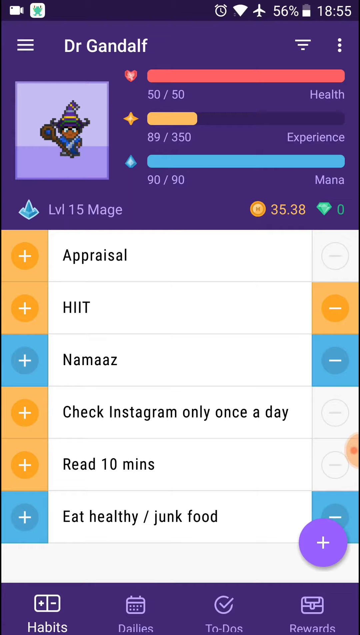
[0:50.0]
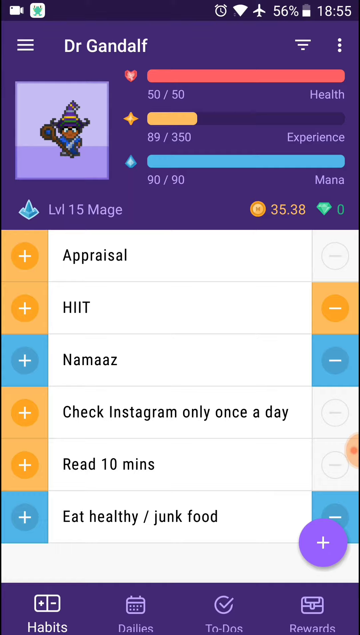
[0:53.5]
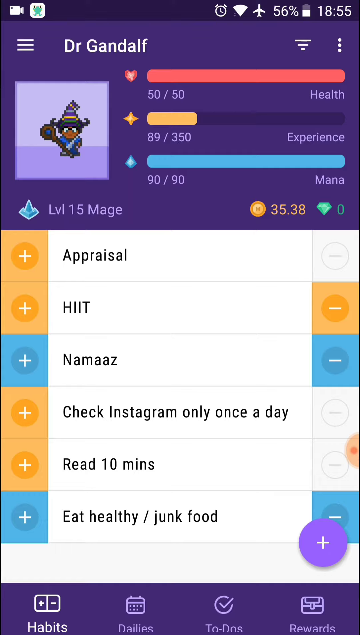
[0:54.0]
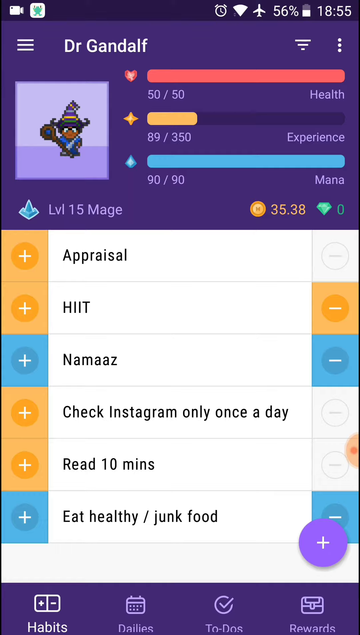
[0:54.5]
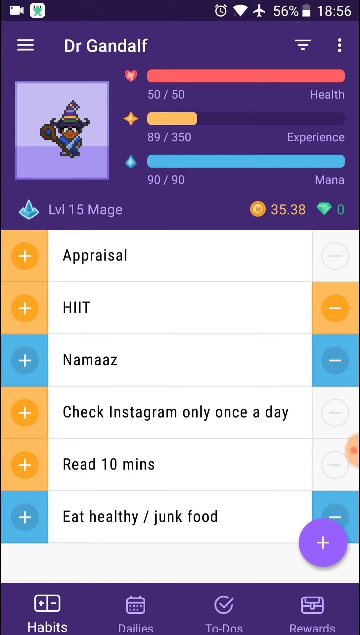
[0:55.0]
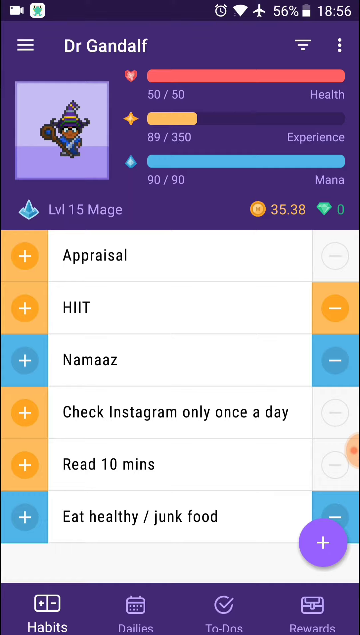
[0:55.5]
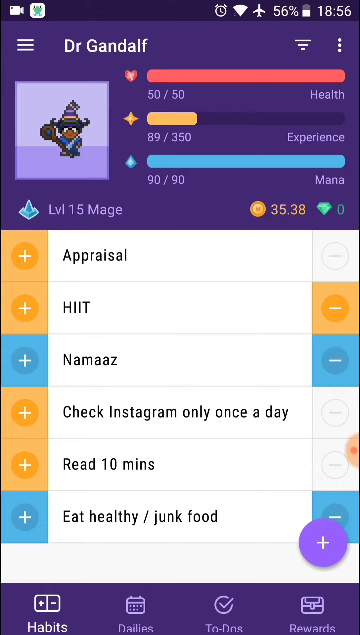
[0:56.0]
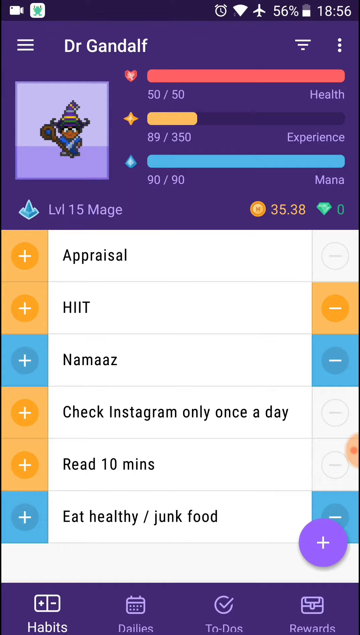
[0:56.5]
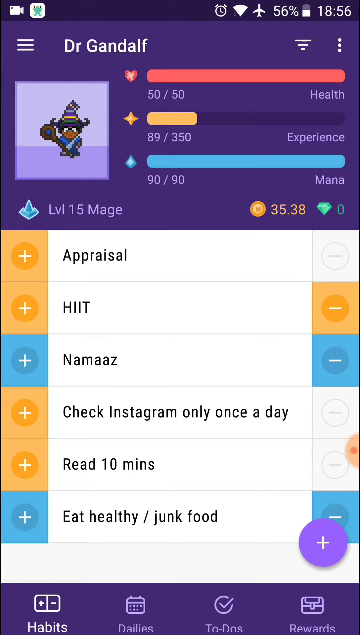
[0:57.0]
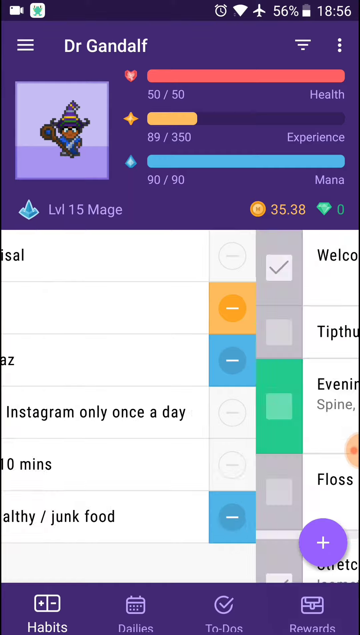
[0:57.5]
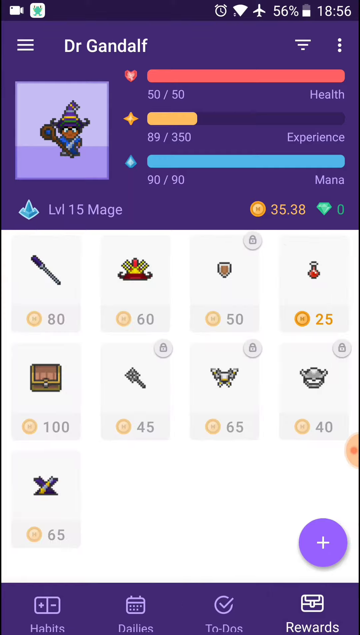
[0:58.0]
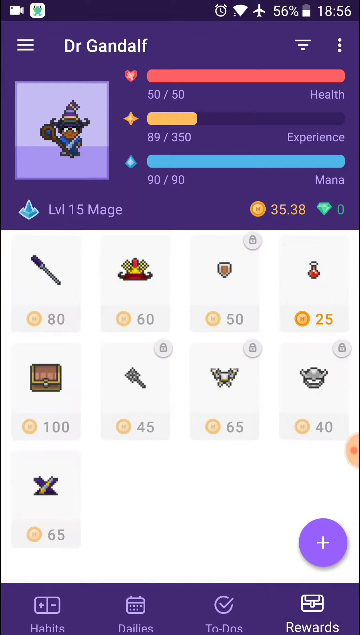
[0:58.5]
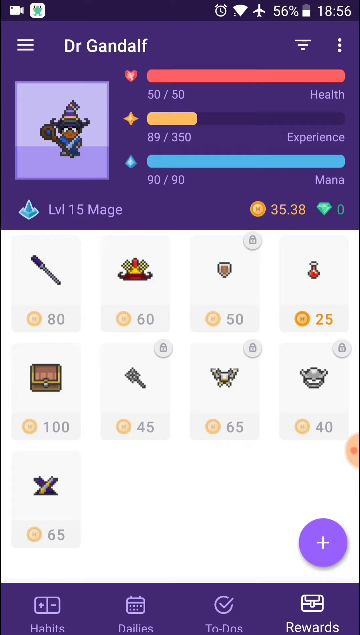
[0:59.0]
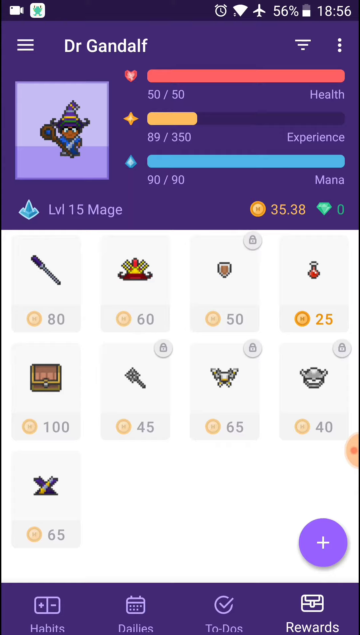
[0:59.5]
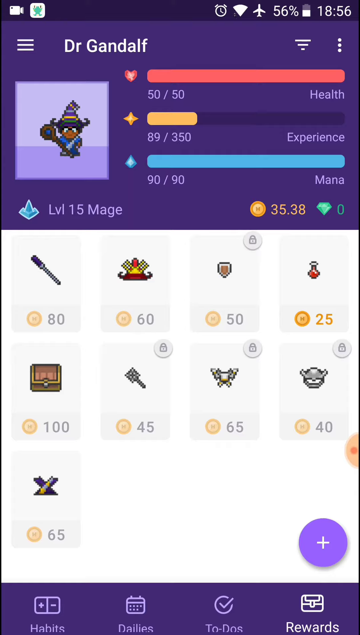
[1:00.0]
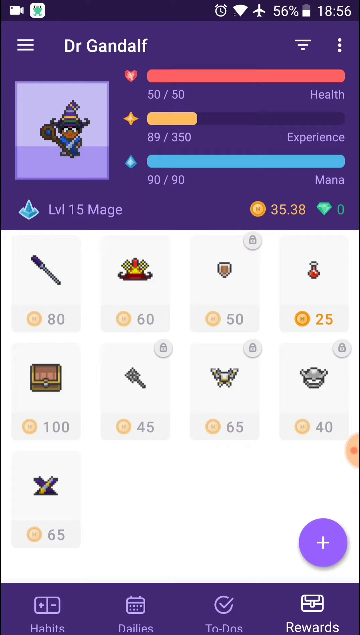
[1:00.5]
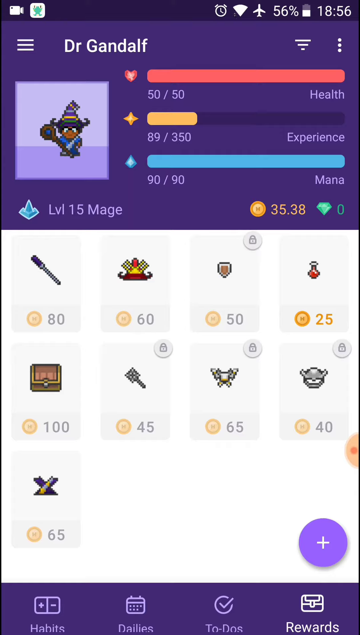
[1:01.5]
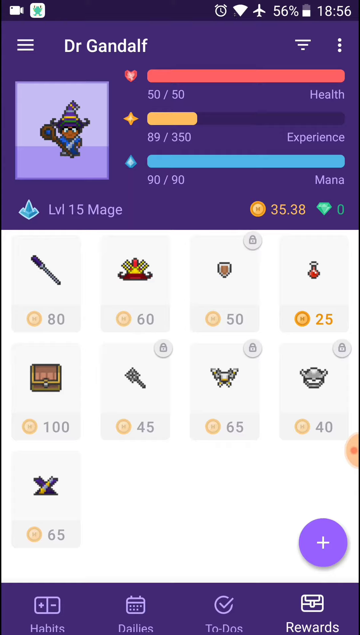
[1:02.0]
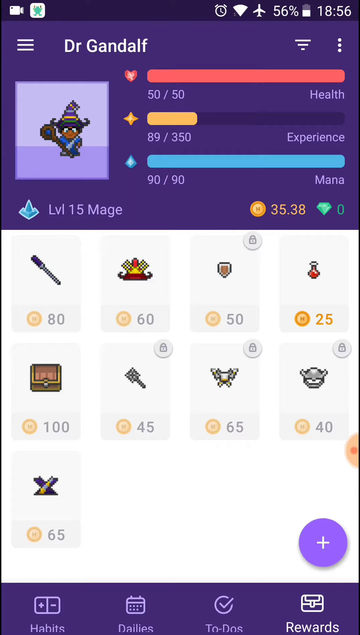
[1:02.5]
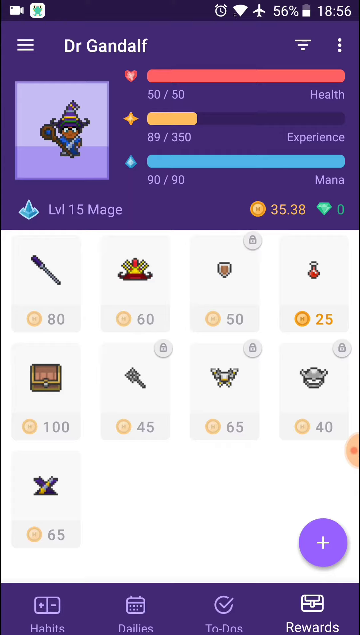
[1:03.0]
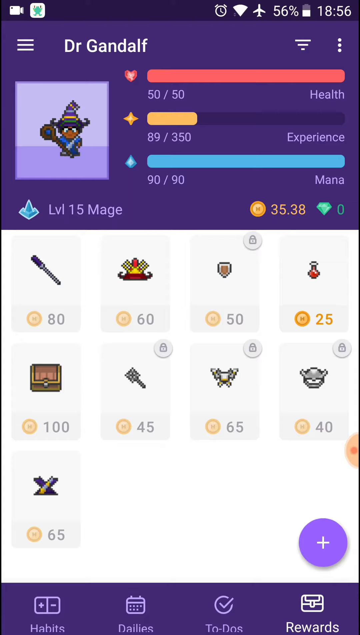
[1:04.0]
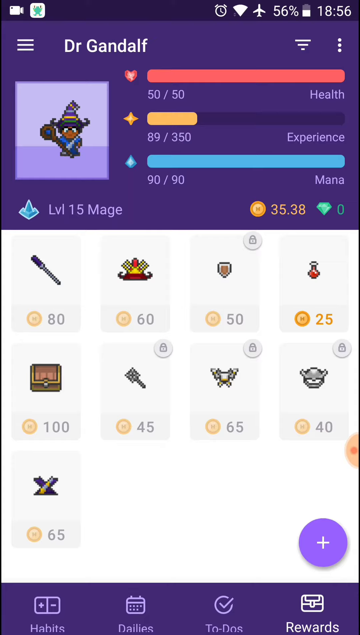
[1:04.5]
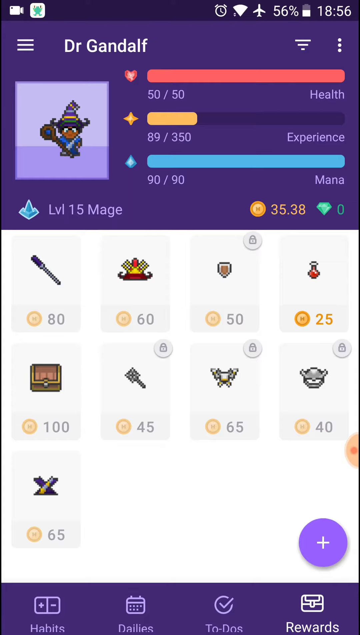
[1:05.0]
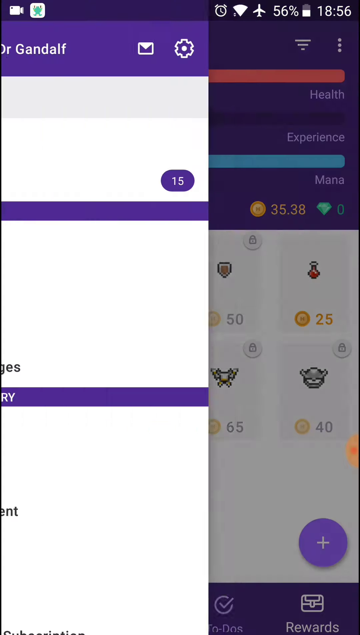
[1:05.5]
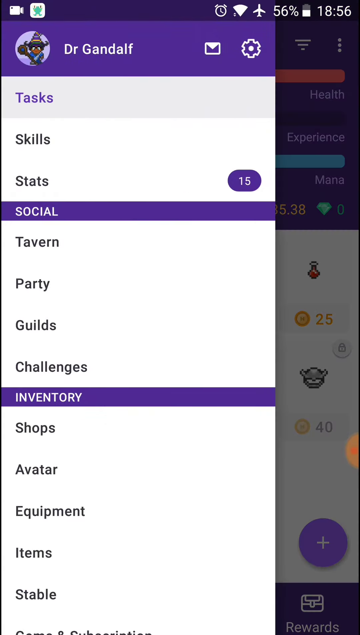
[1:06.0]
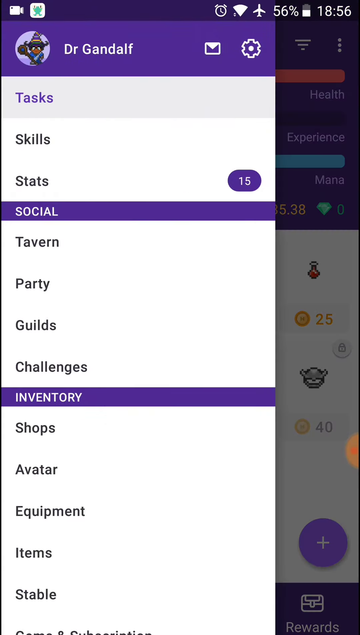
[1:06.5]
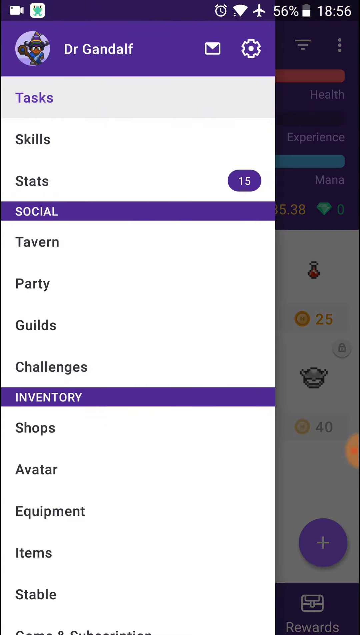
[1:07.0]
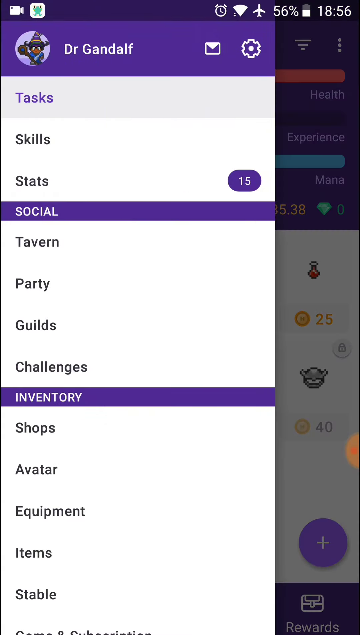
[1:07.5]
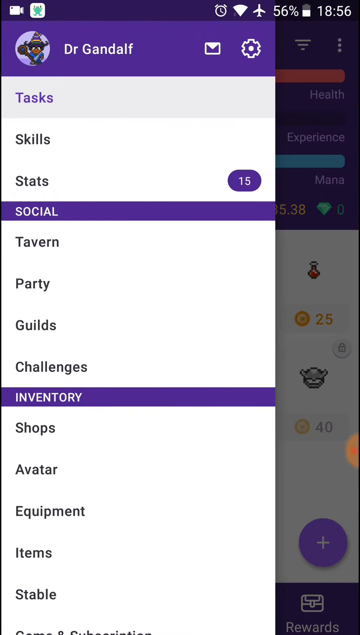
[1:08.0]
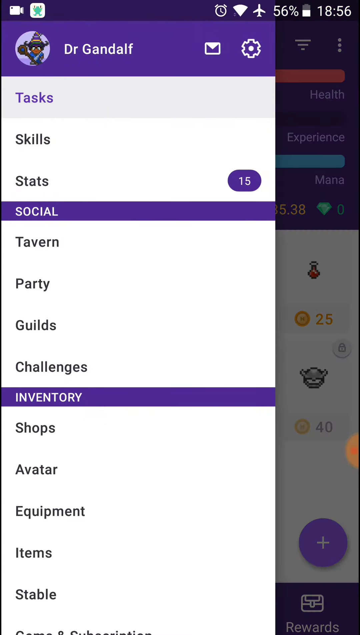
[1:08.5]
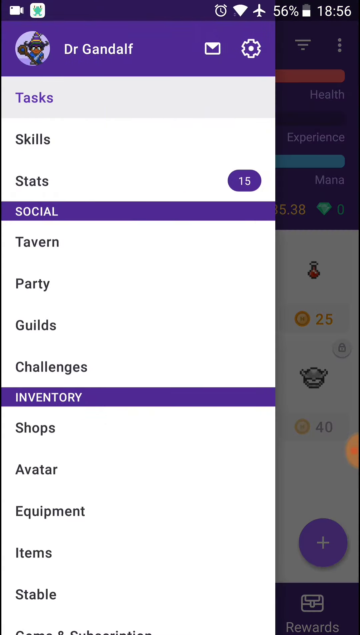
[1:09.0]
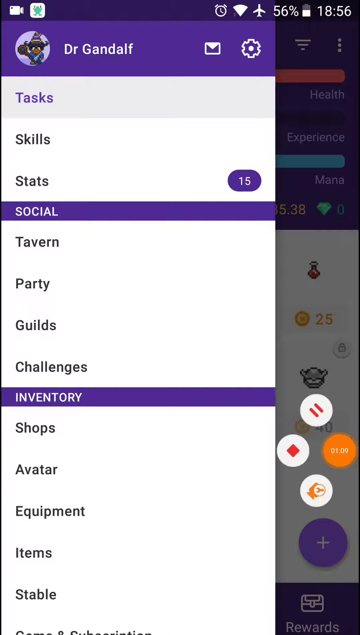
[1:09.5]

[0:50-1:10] The list remains on screen, with a small picture of the character in the top left corner. The user swipes the screen to view what looks like weapons and accessories the character can use; there are a number of different items, and they appear to cost tokens. A menu then comes in from the left side as a column of selections: skills, stats, tavern, party, guilds, challenges, shops, avatar, equipment, items and stable. The user then selects a small orange circle hiding on the edge at the bottom right of the screen, the always-on-top screen recorder app. When clicked, it comes out of its hiding mode from the right side, moving to the left, and three other circle options appear. The orange circle has a timer on it showing how many minutes and seconds the screen has been recording.